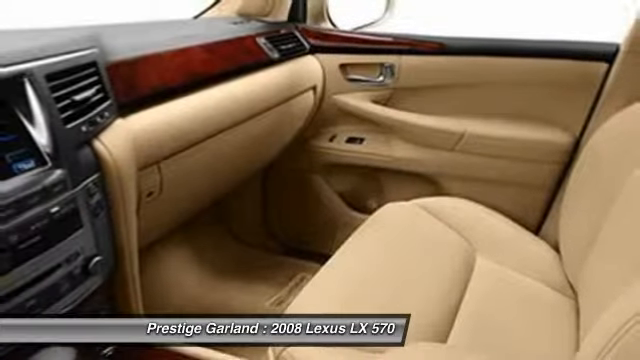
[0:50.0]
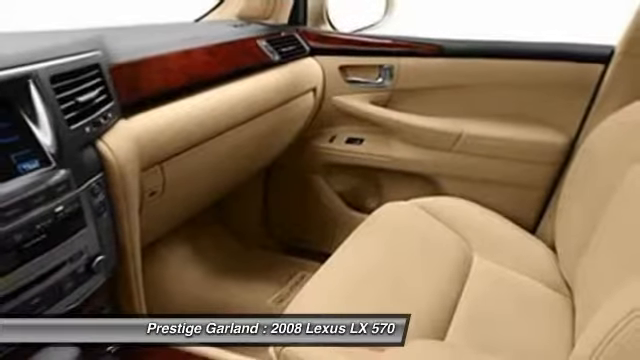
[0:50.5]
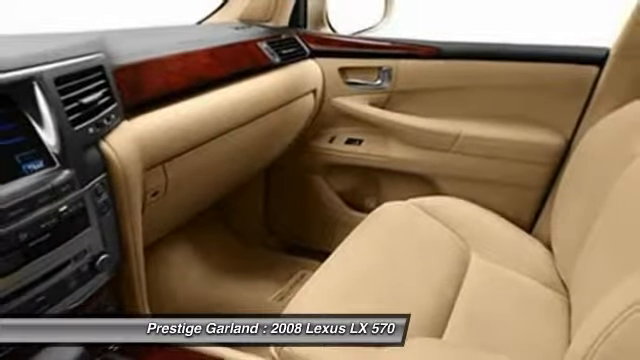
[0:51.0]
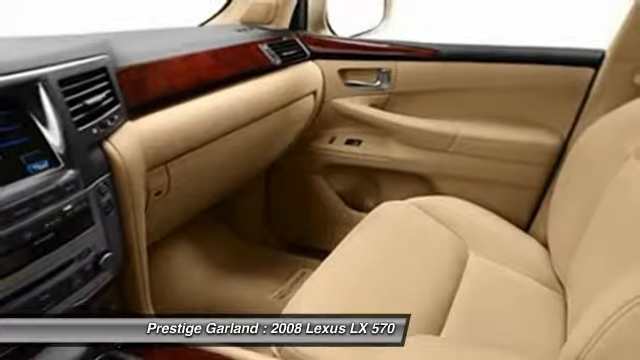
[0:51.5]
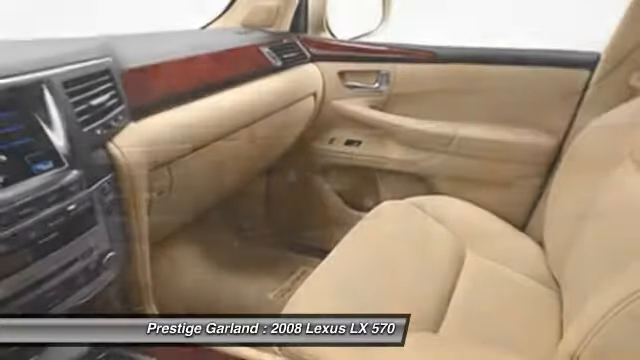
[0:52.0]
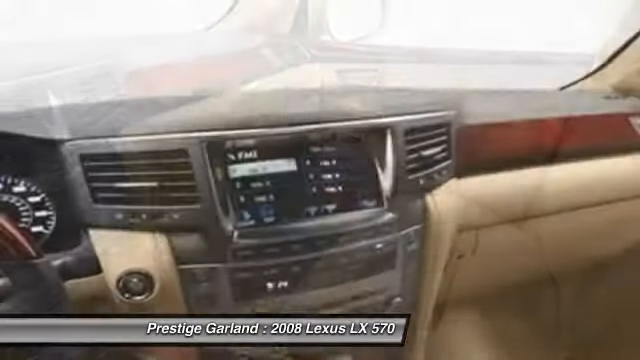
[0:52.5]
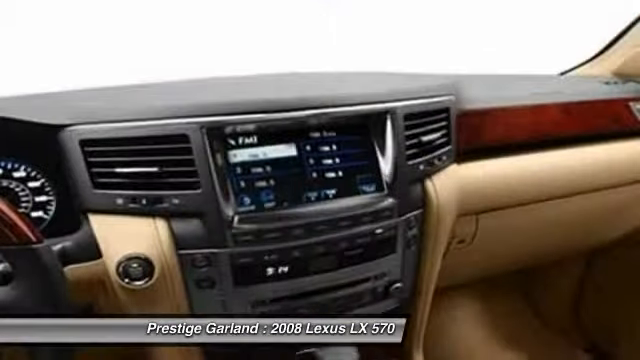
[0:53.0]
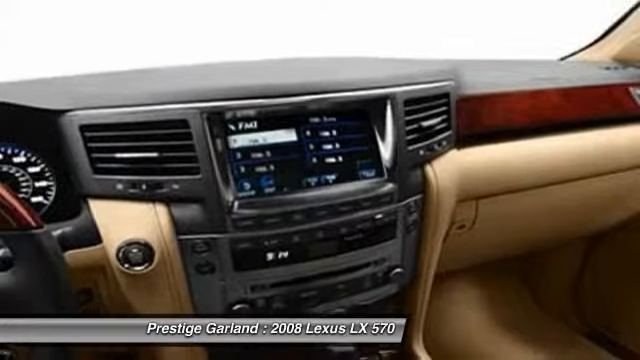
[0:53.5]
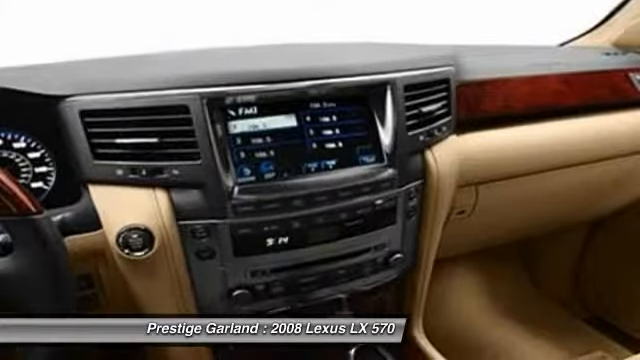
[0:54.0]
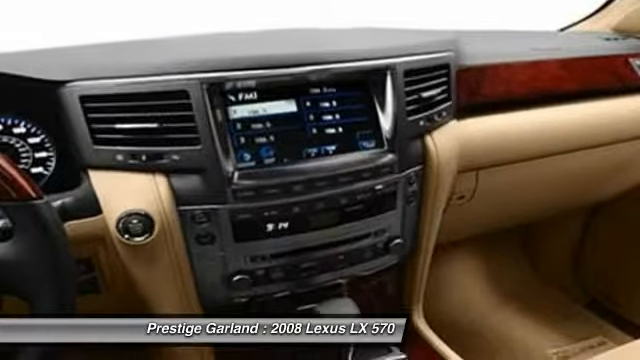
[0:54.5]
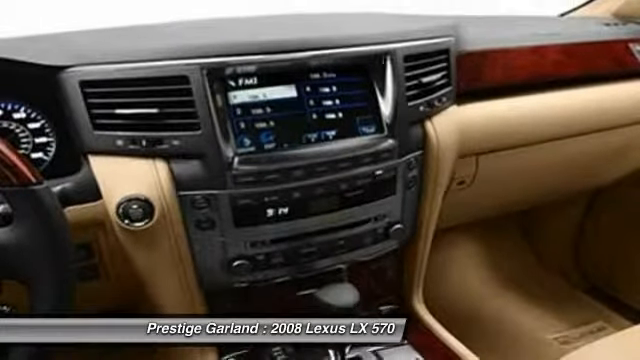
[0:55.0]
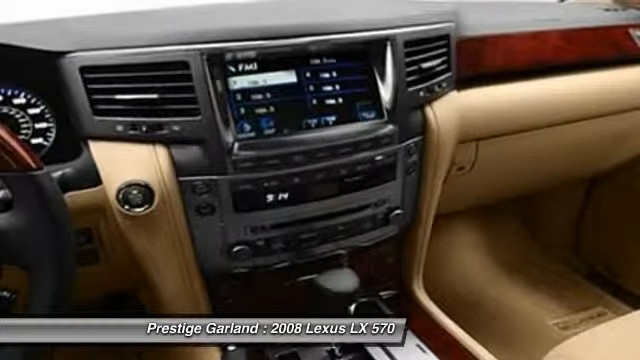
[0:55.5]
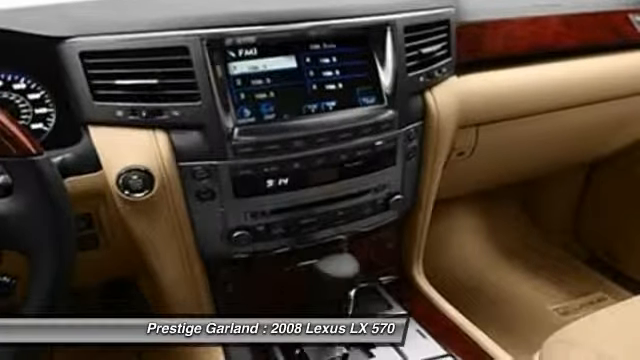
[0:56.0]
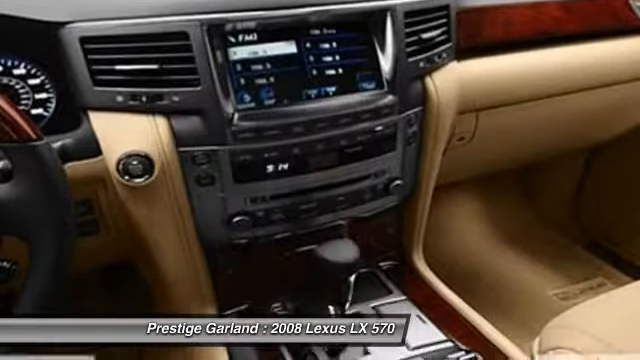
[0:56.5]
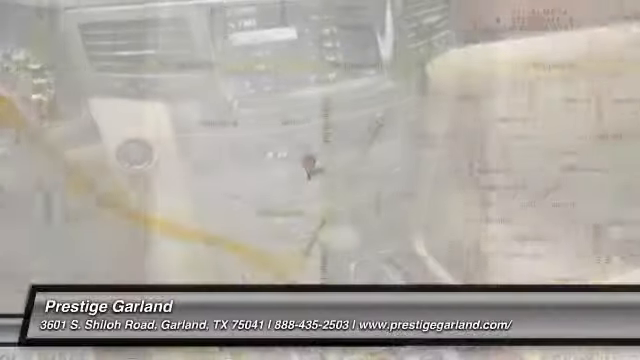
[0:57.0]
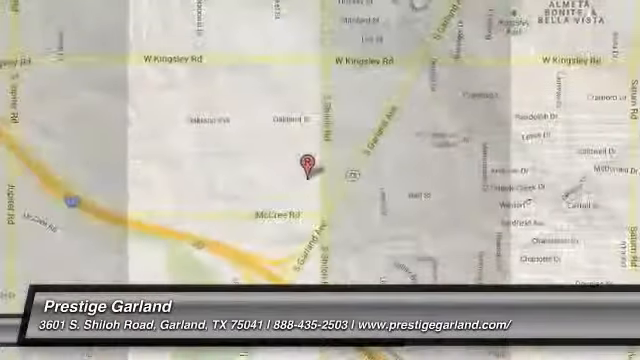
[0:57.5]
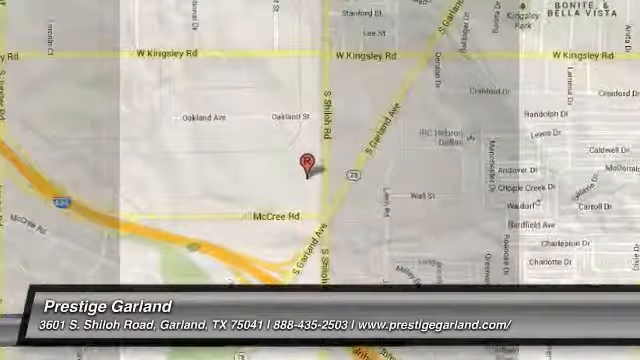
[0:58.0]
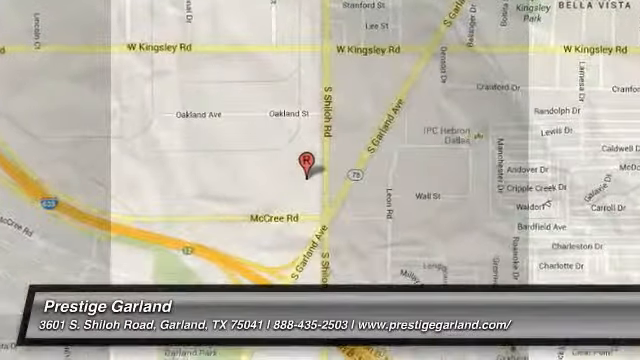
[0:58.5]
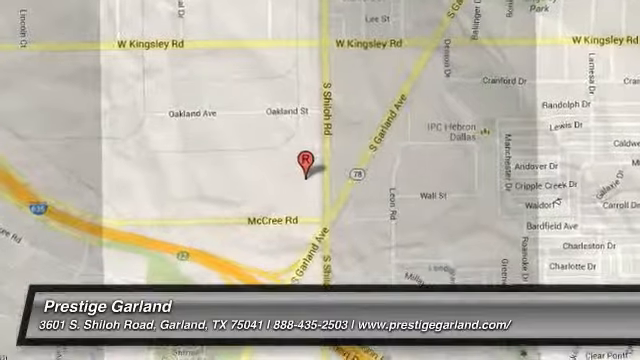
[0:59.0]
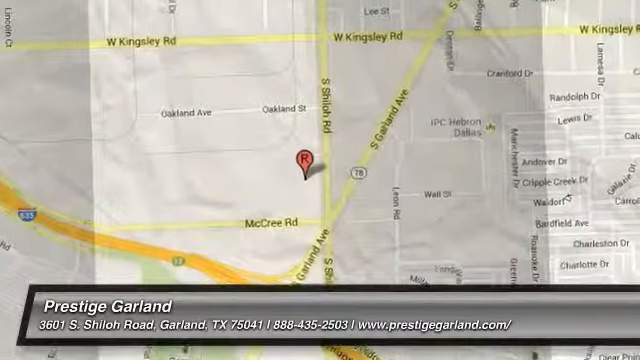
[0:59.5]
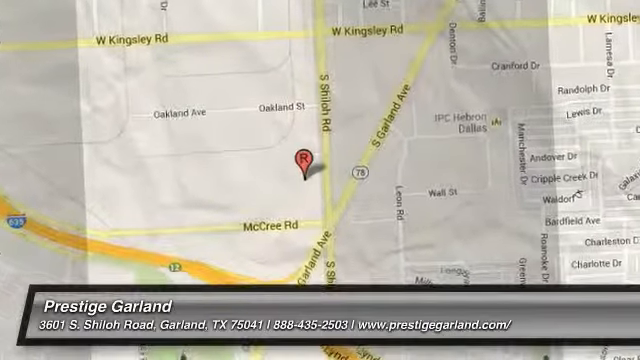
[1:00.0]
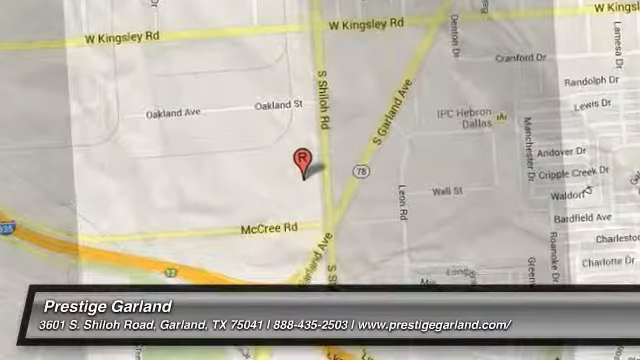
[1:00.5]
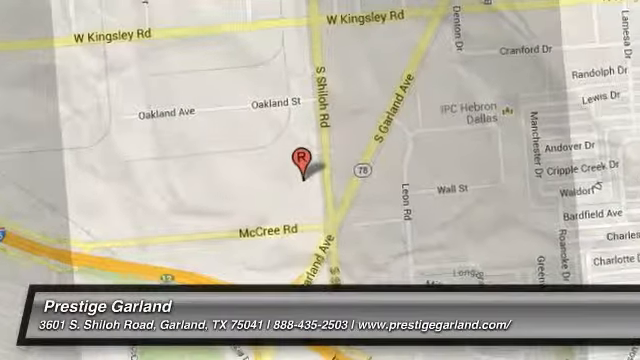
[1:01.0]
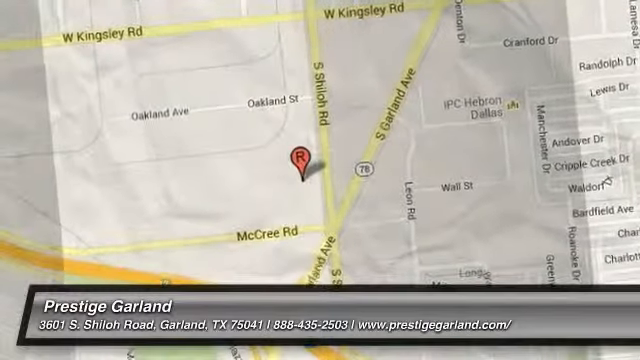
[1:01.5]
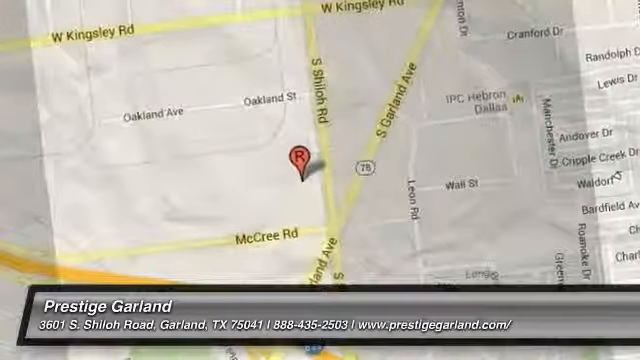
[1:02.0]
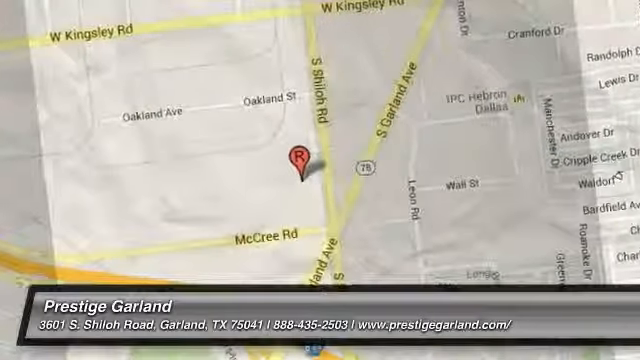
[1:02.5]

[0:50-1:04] The inside of the vehicle is still shown, focused on the front passenger seat, with a little of the middle console and radio visible. Everything is mostly a gold color, with a little burgundy on the dashboard. The middle console with the radio is black. The video scrolls back and then shows a clear shot of the middle console with the radio, the vents, and the different controls. Finally, a map shows where the car company, Prestige Garland, is located.